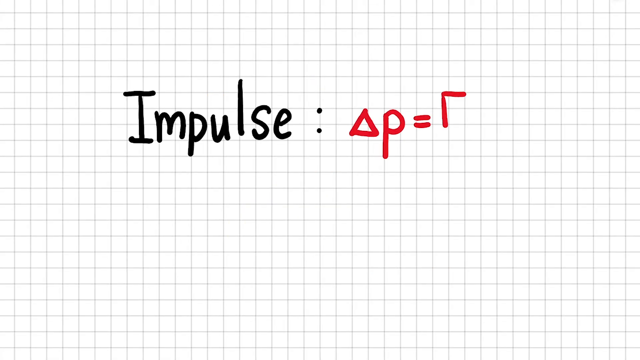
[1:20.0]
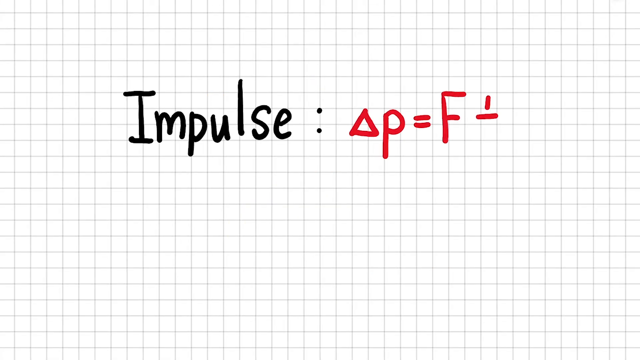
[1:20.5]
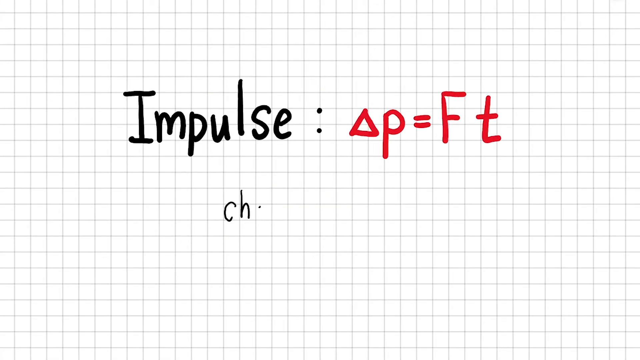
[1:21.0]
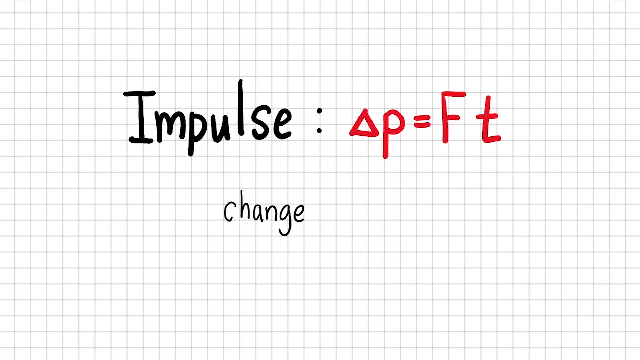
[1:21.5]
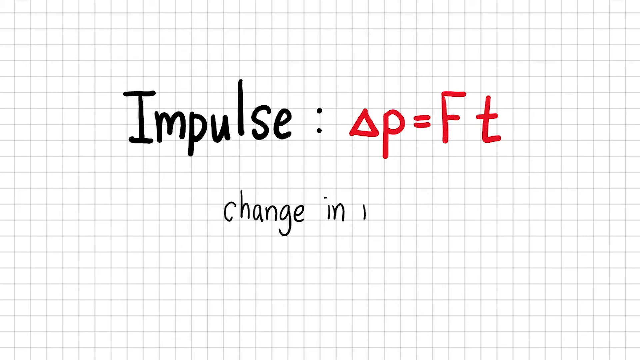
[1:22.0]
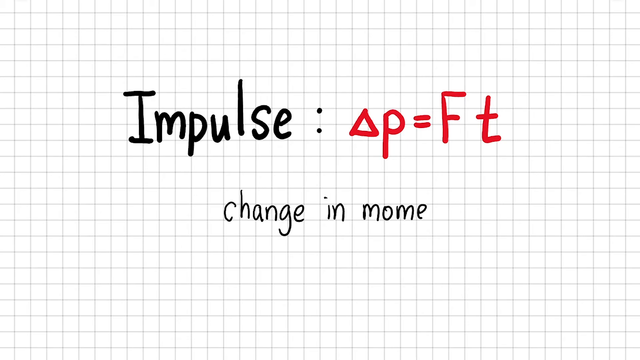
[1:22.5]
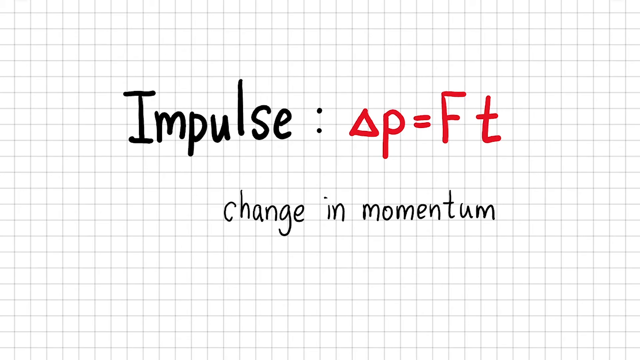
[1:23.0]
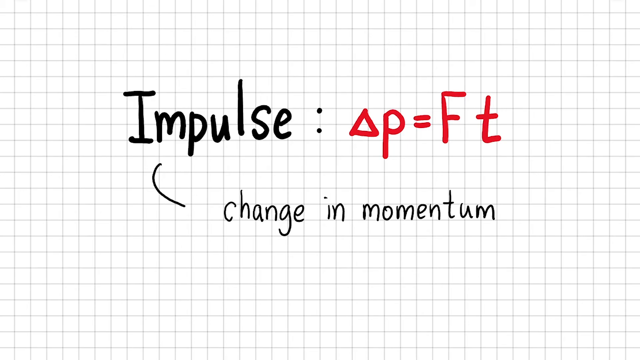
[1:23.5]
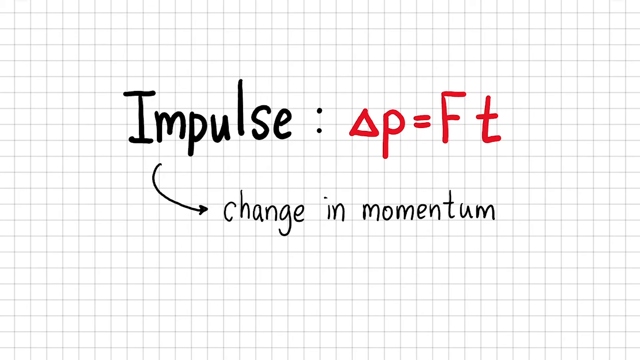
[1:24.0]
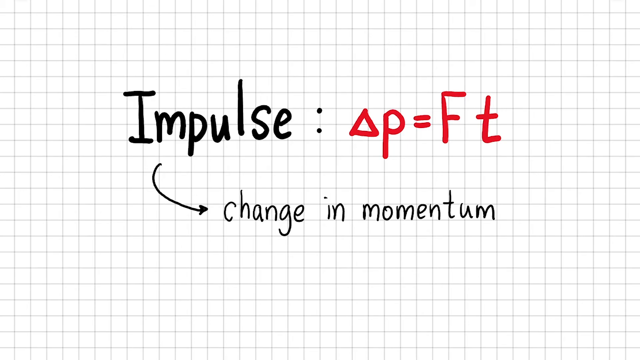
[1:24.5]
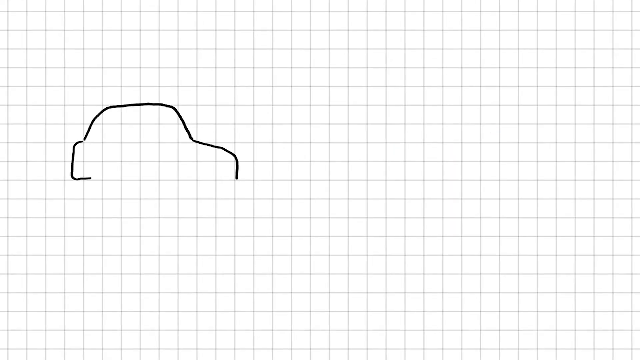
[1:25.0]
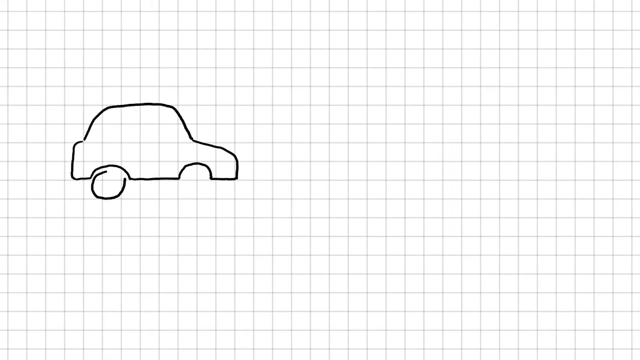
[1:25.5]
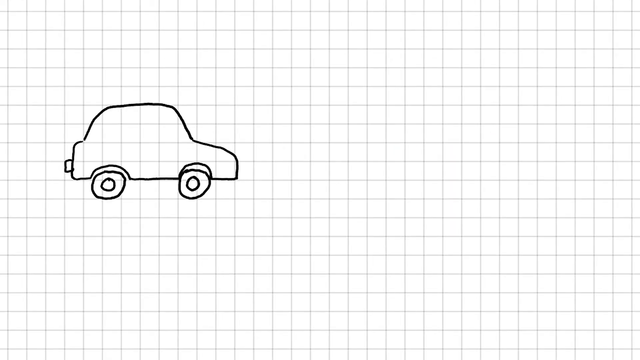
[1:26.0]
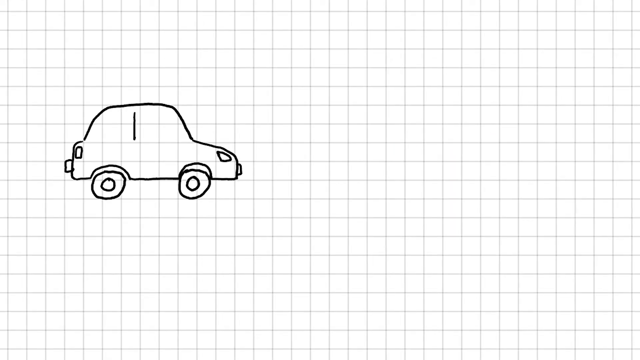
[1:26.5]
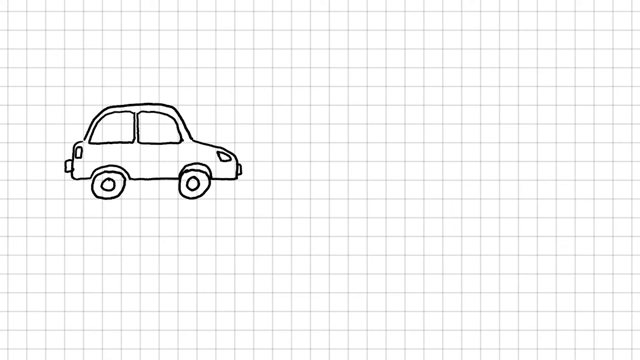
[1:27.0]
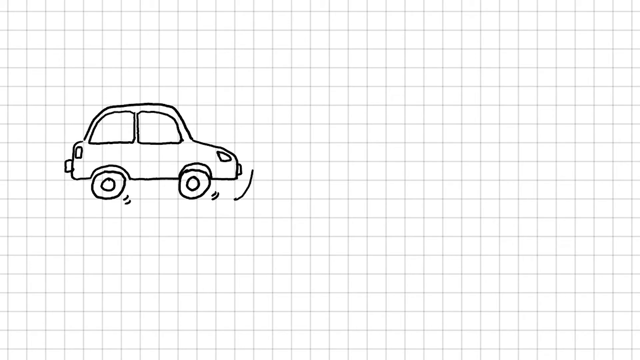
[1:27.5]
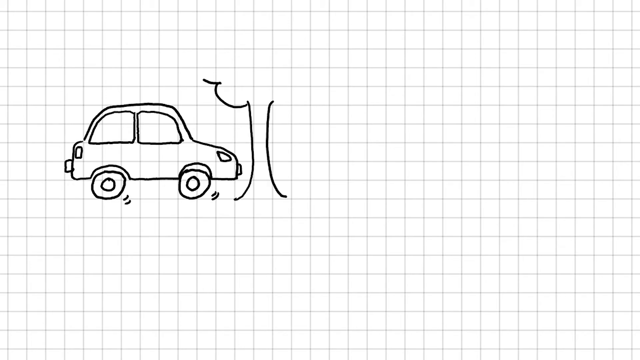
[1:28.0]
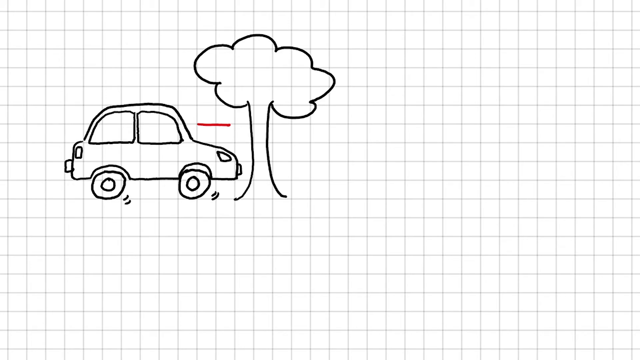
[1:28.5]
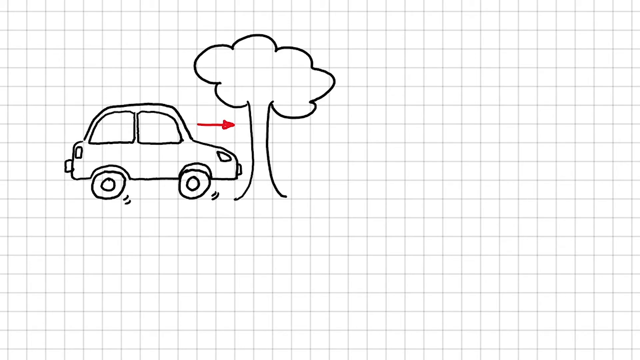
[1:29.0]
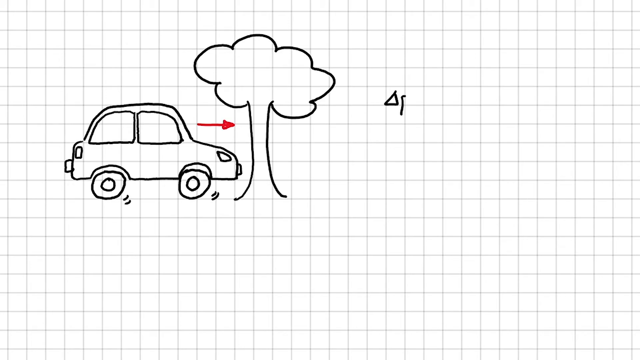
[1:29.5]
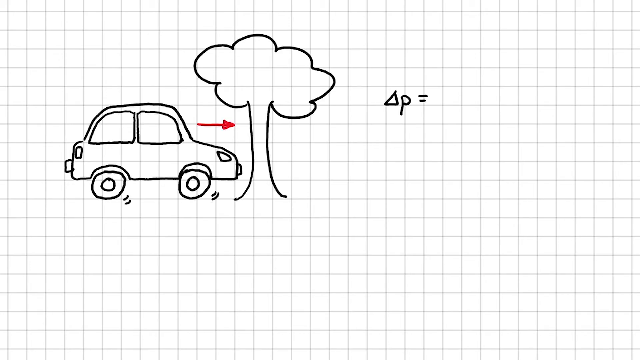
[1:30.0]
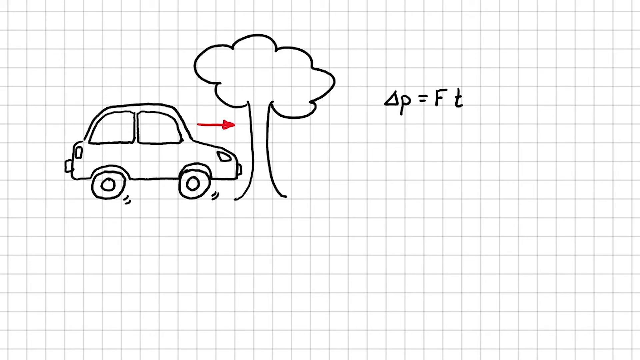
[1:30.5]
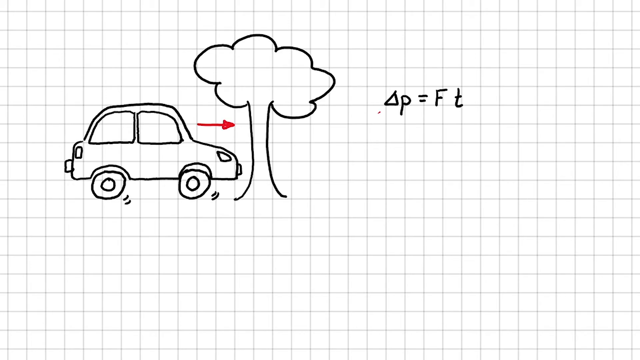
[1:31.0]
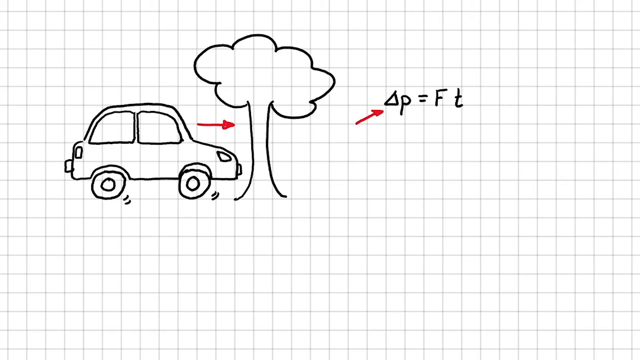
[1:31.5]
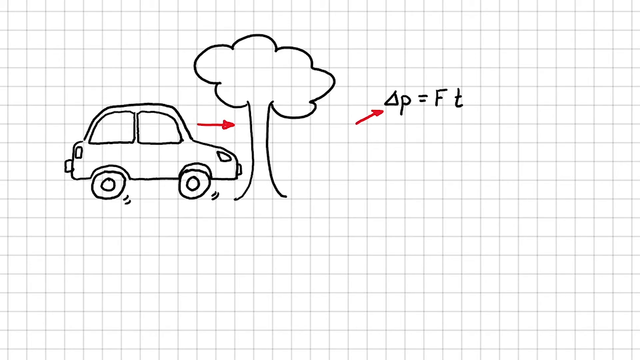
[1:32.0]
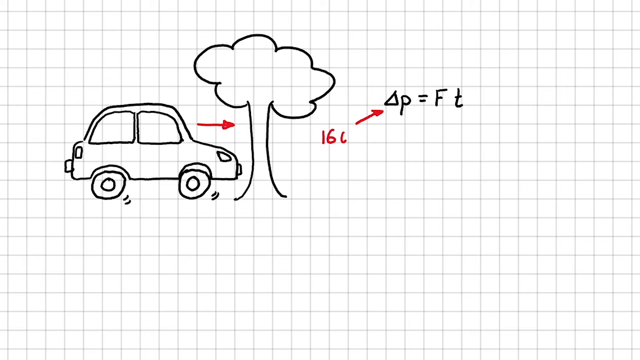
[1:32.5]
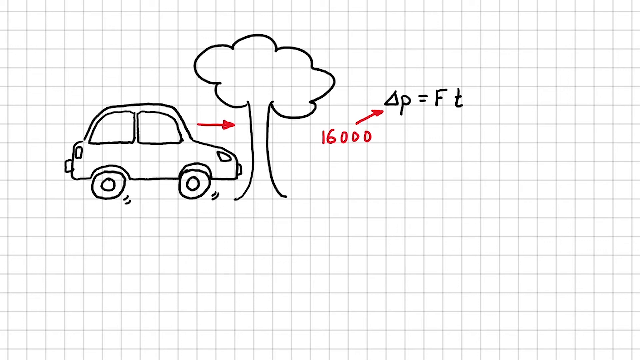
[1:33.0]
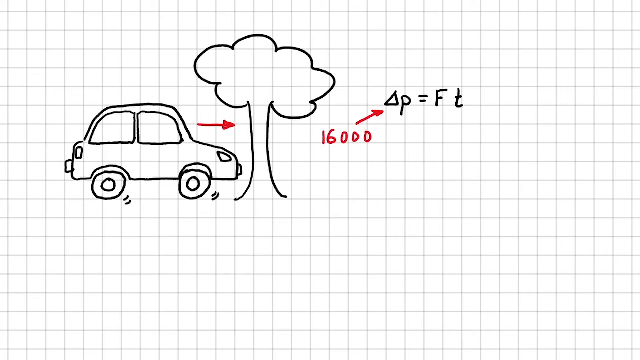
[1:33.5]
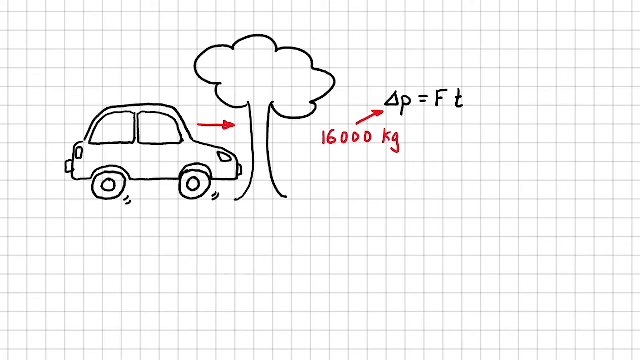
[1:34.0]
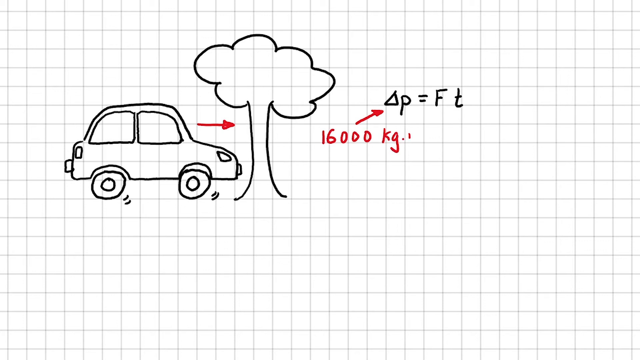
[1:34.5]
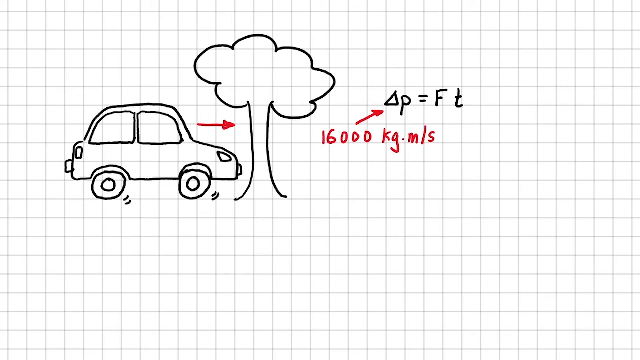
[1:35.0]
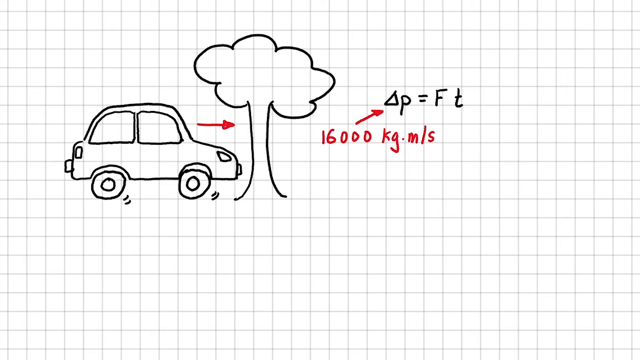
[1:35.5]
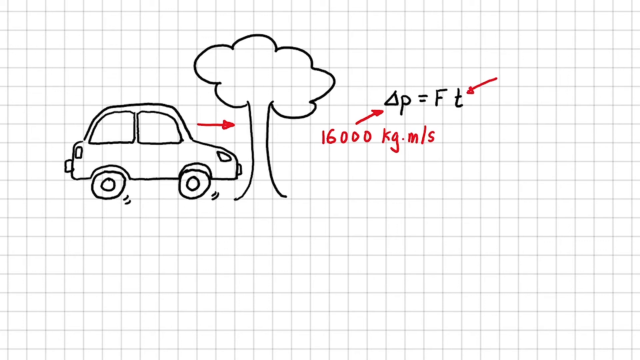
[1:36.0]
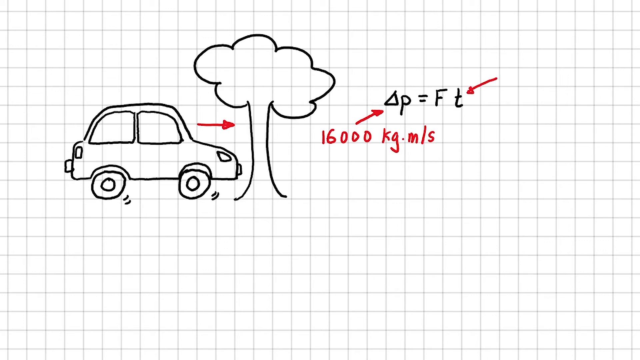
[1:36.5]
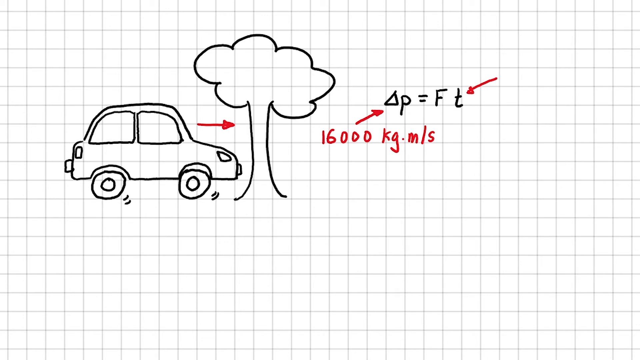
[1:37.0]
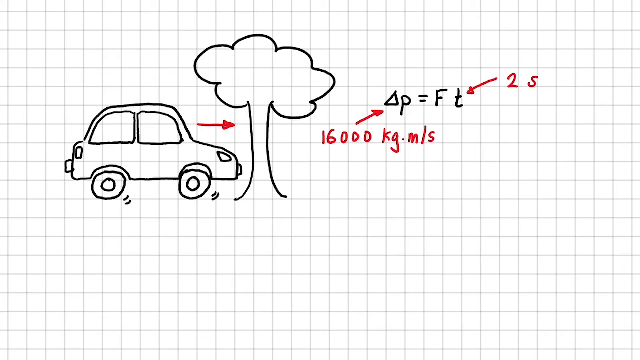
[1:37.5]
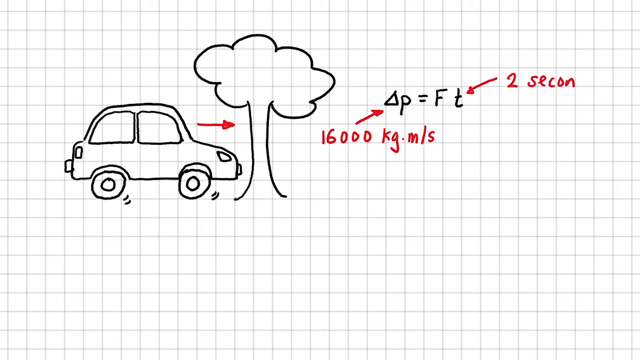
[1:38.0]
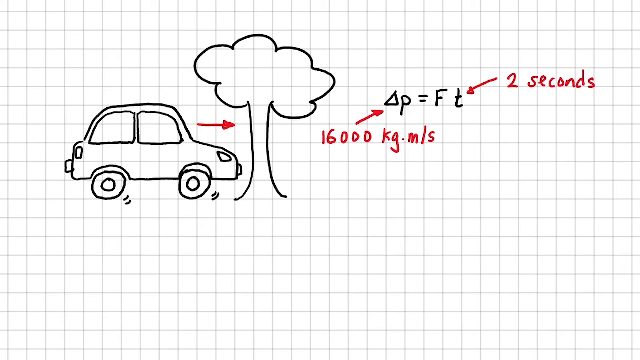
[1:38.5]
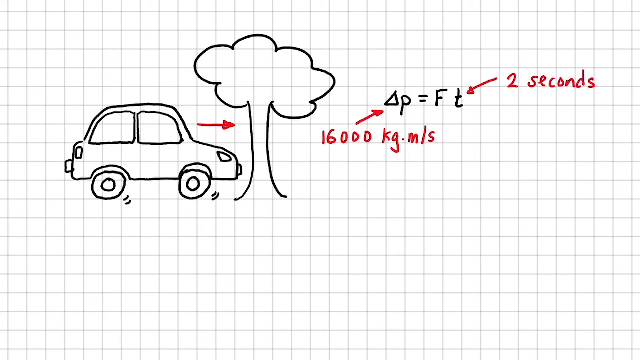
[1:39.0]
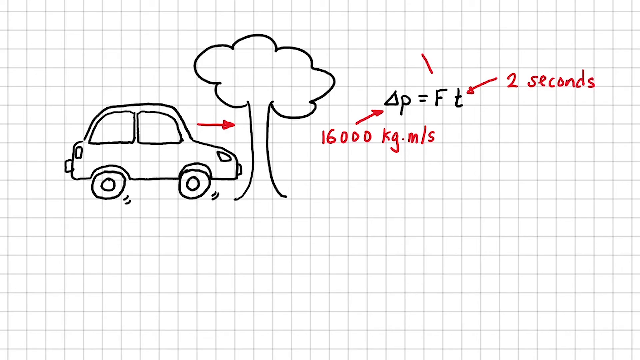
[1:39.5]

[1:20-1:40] A presentation screen with white color and a blue-grey background shows big, bold, thick text reading "impulse:" in black followed by "delta p = F t" in red. Below it, "changing momentum" is written in slightly thinner black text. An arrow is then drawn from the impulse text above to the "changing momentum" text below, pointing at the second line. On a new screen with the same grid pattern background, an outline of a car is drawn part by part: a side view of the car with two wheels and a windshield at the front. An outline of a tree with a canopy is drawn, and a red arrow is drawn from the car pointing at the tree. To the right of the diagram, "delta P = F t" is written. A red arrow is drawn below, pointing at the delta, and "16,000 kg m/s" is written in red letter by letter below that arrow. A red arrow is drawn above, pointing at the t in the formula, with "2 seconds" written in red to its right, and another arrow pointing at F is drawn on the opposite side.